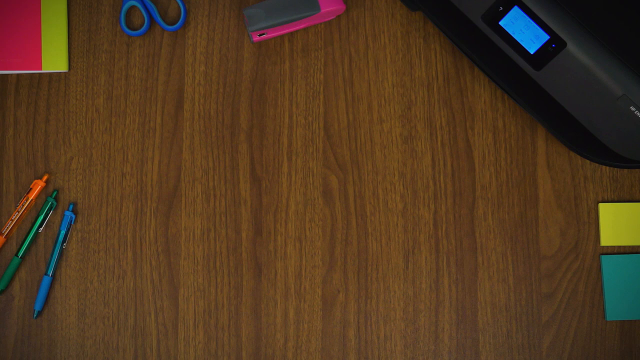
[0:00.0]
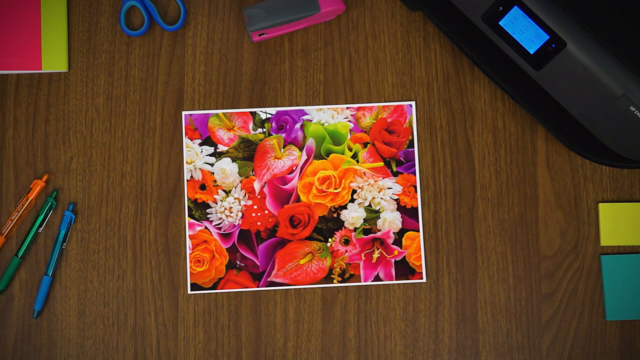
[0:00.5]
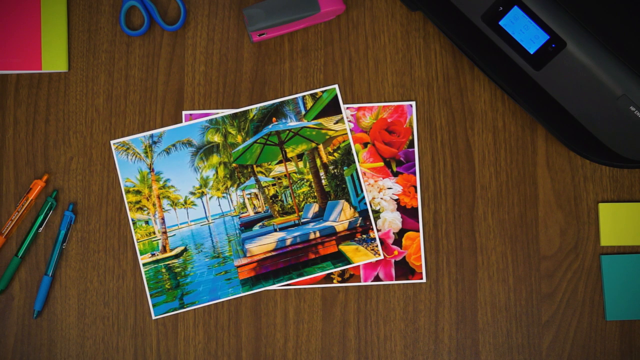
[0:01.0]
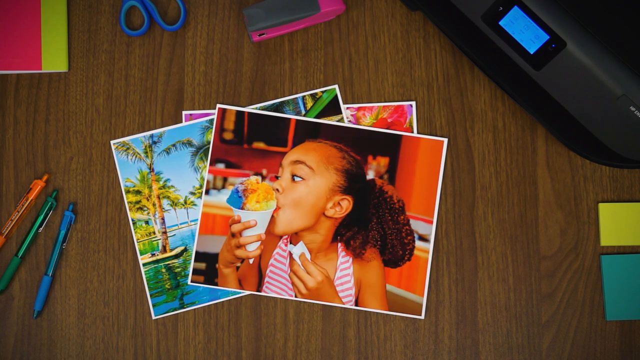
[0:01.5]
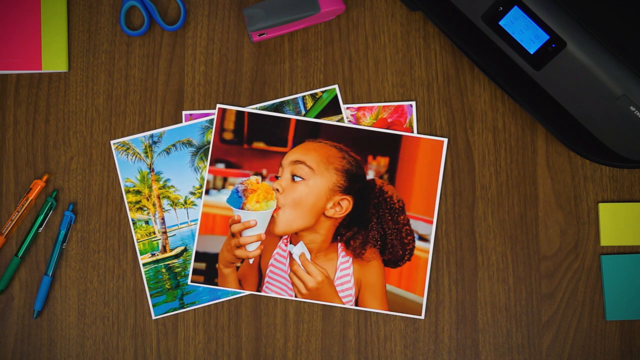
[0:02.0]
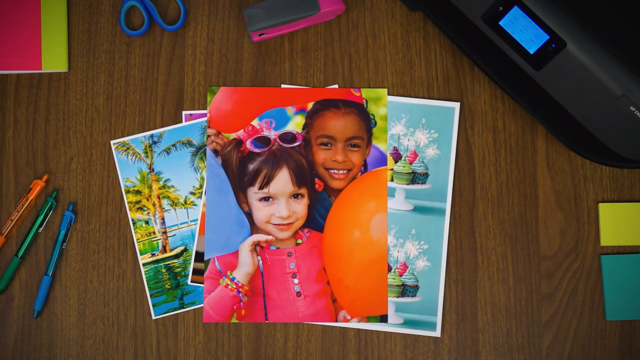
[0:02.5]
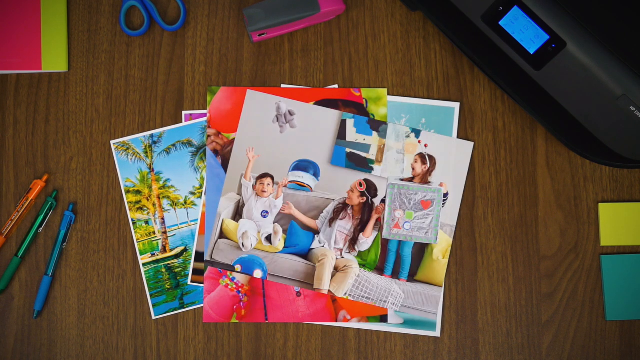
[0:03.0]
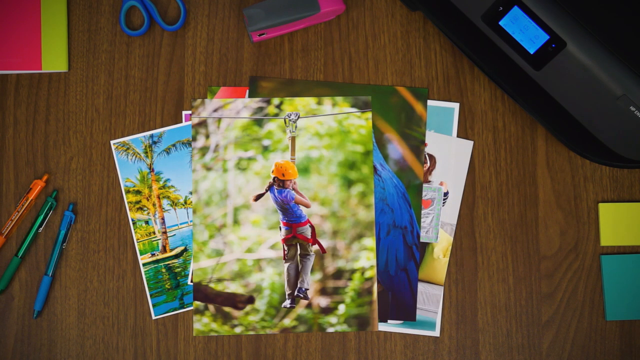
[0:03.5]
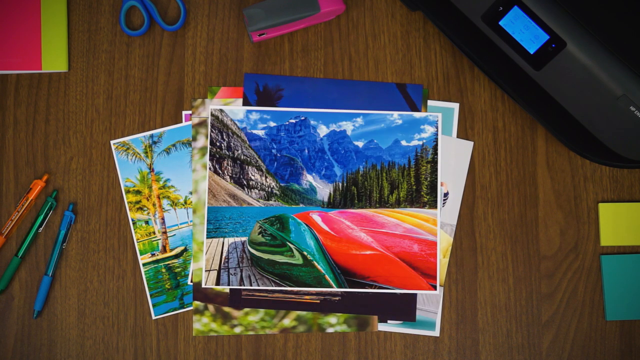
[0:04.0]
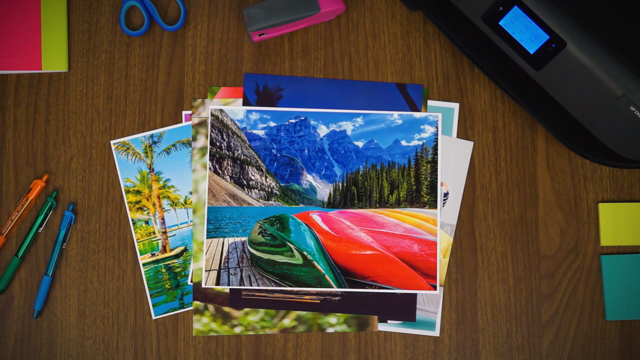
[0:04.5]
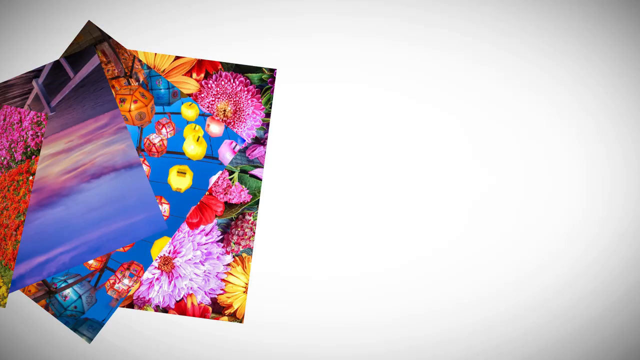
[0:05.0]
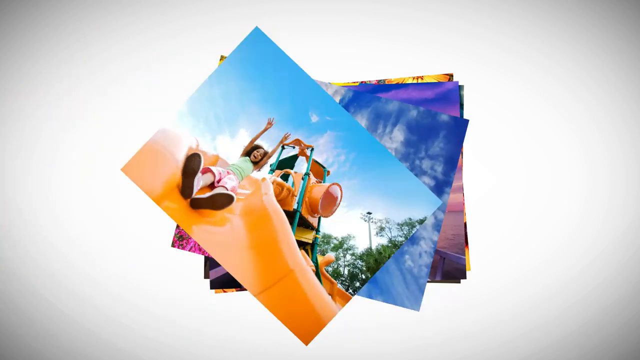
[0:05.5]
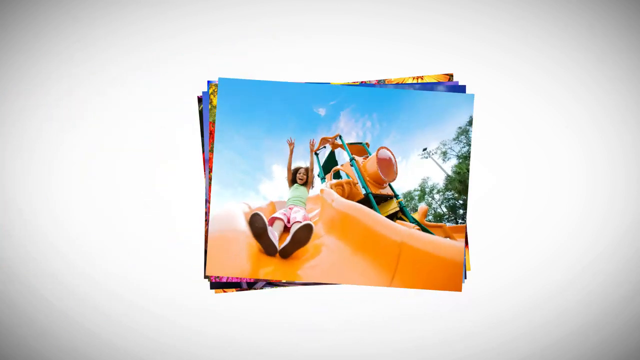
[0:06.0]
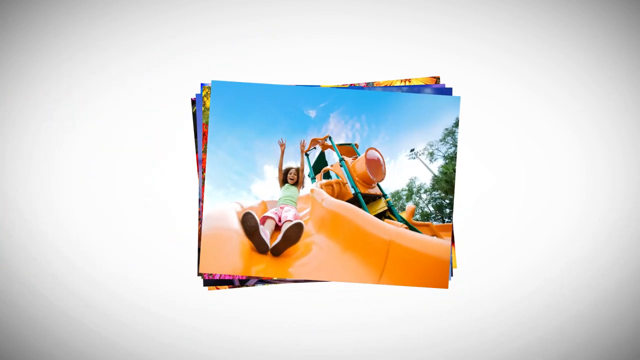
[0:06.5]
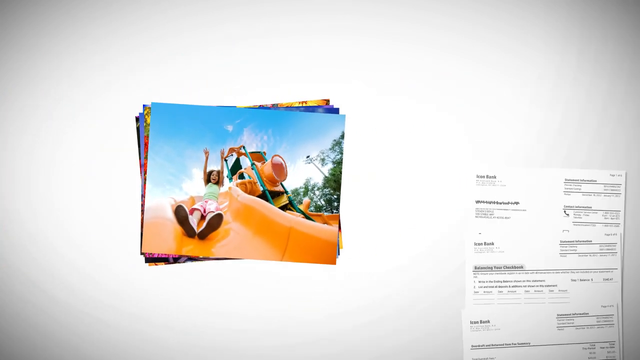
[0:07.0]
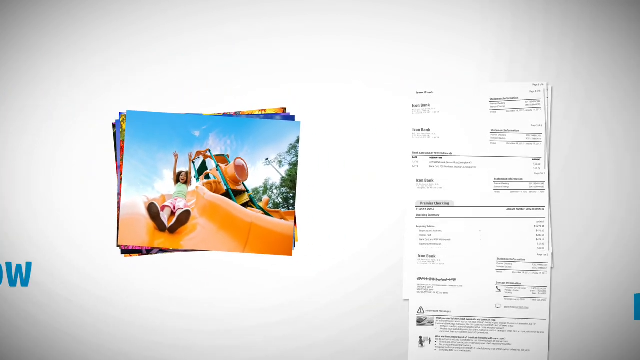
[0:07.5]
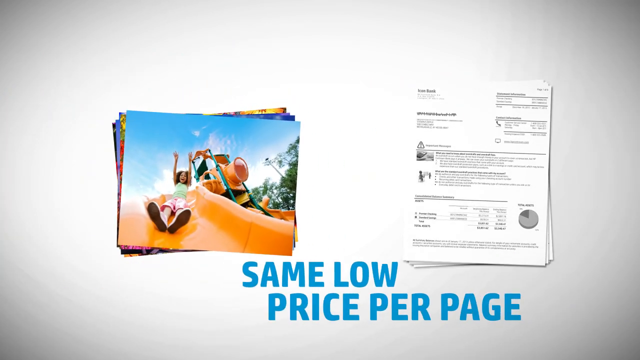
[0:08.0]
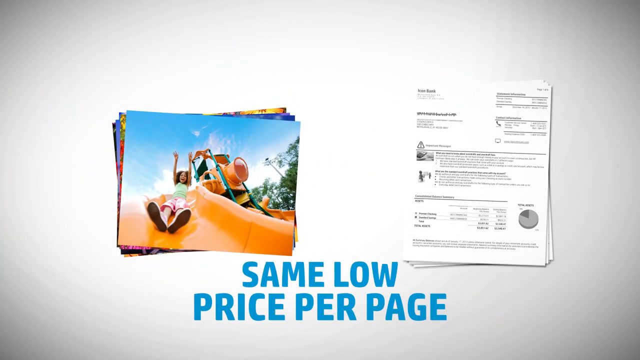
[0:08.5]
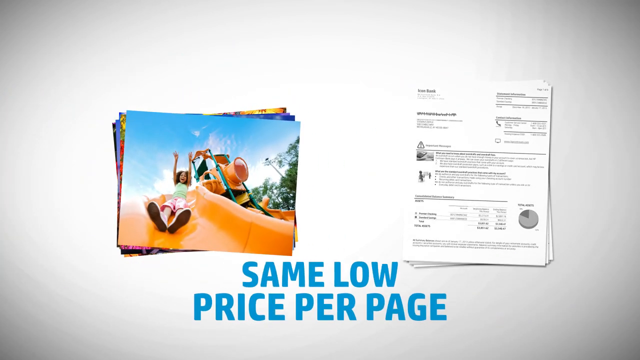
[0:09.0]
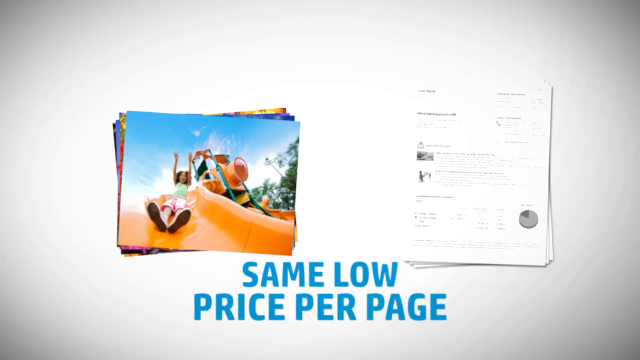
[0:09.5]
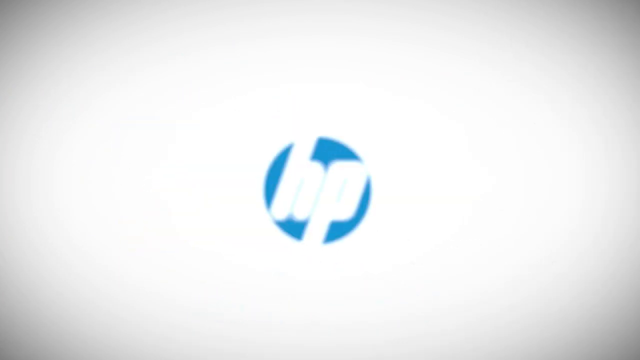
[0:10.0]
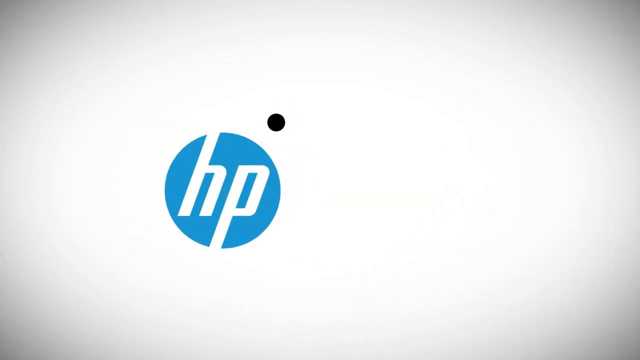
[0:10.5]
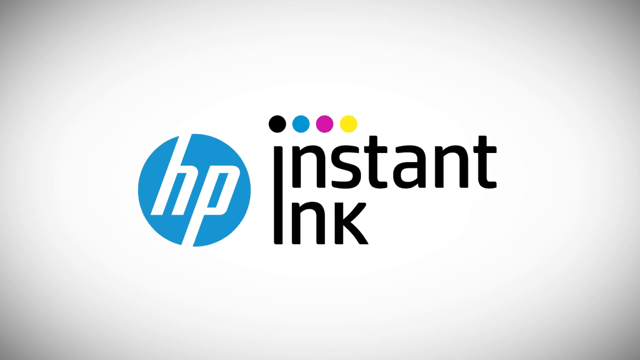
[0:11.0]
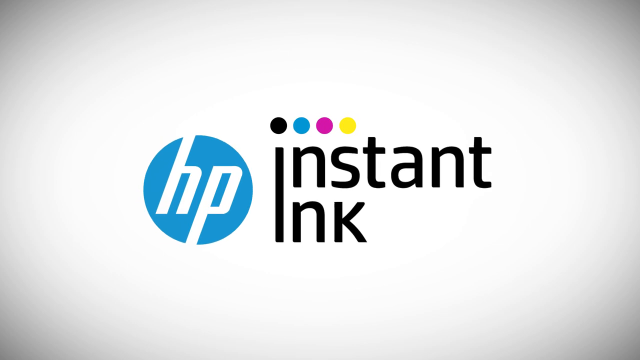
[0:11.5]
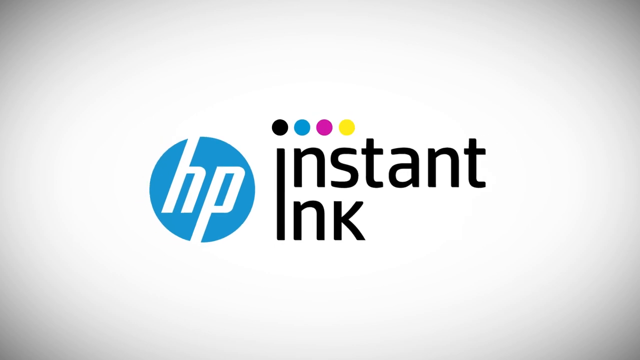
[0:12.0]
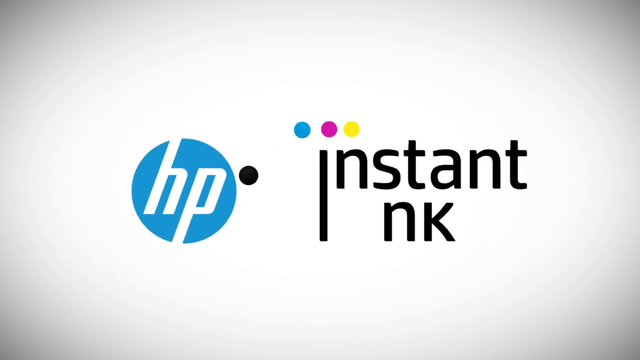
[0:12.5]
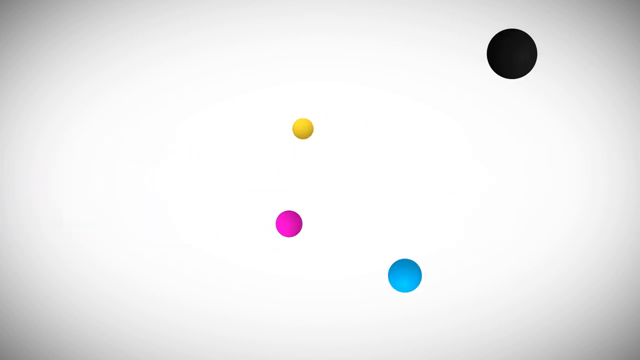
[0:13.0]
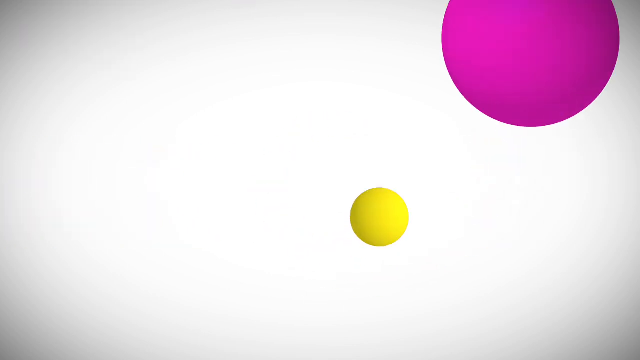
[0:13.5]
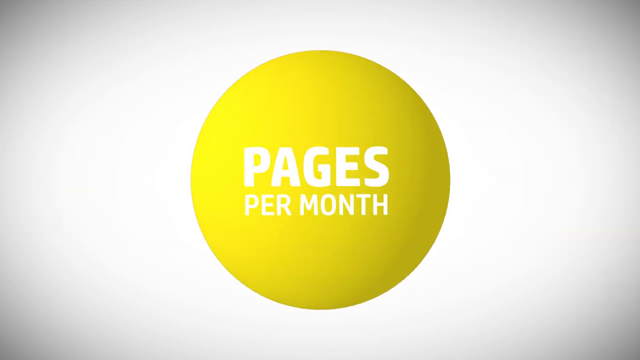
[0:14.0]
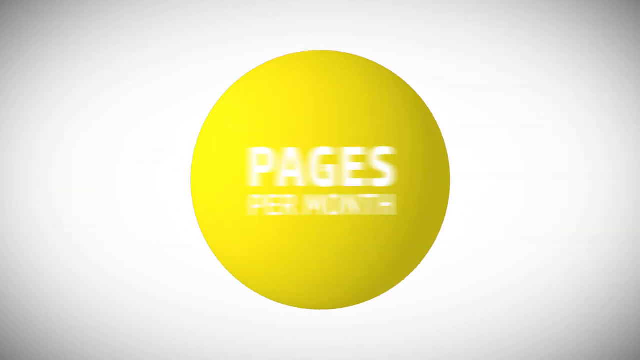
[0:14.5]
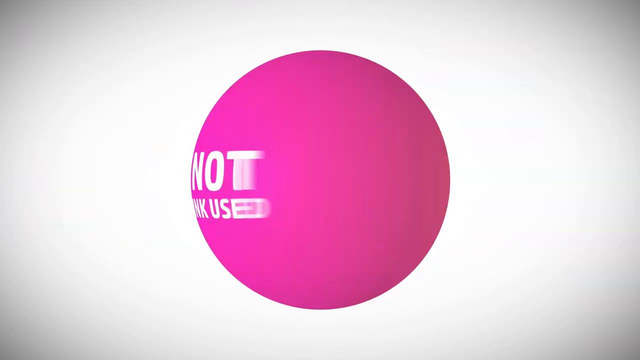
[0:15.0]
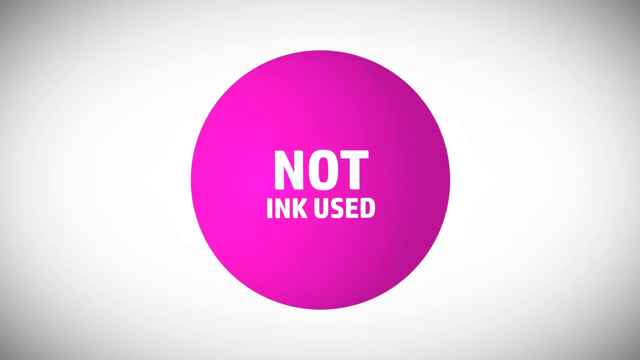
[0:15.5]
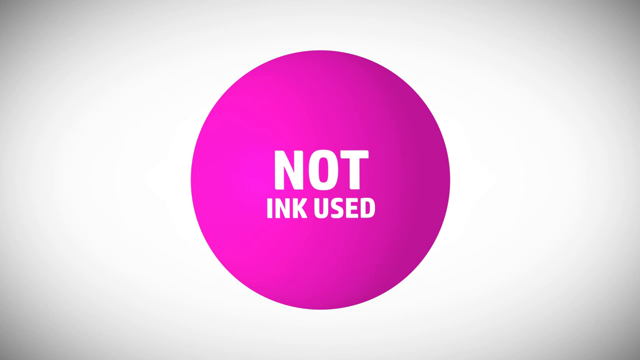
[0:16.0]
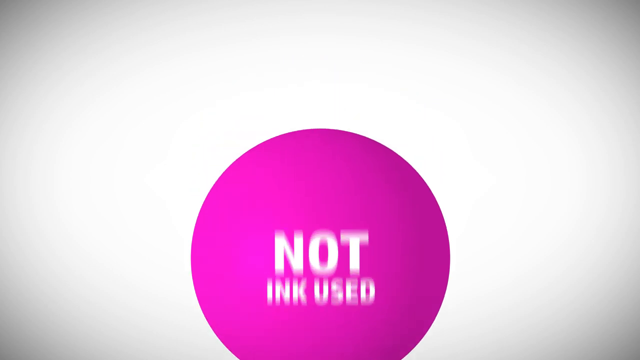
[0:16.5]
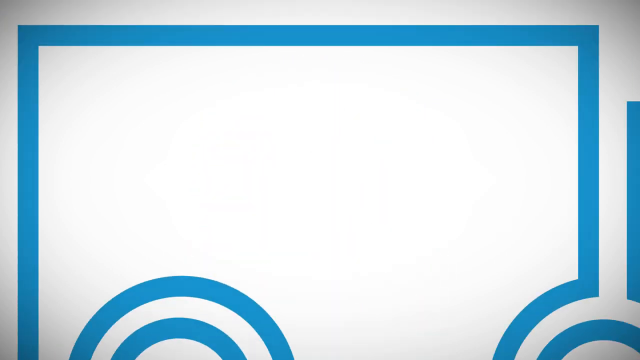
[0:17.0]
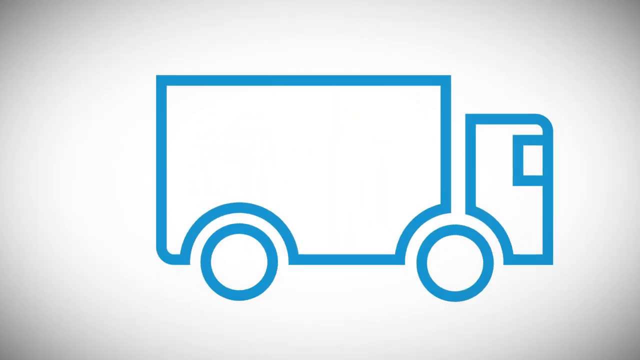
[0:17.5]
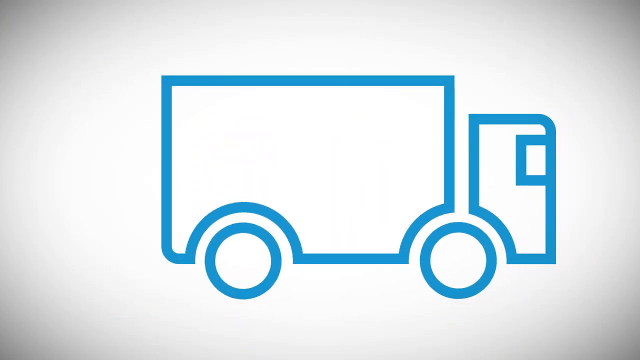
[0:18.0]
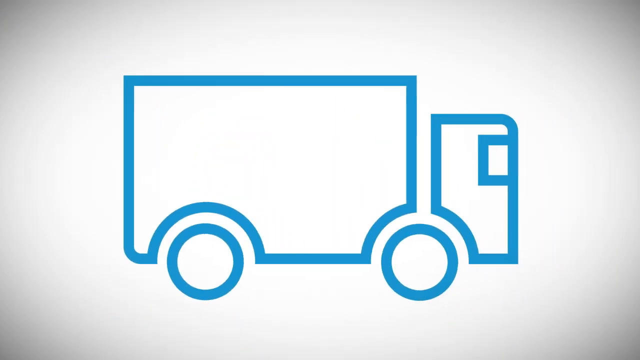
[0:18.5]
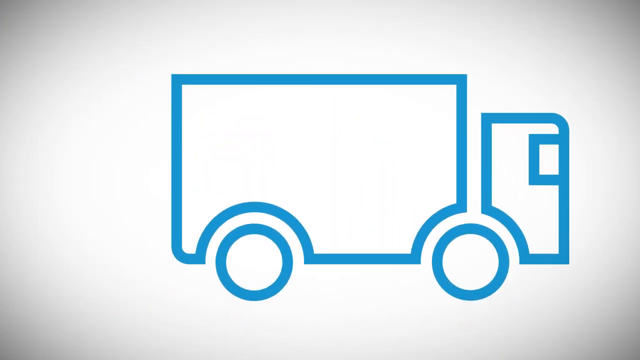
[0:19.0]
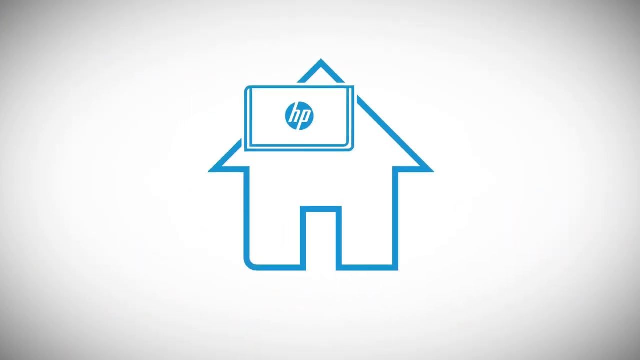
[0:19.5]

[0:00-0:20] A series of pictures on a desk represents a family's memories together. Logos appear in different colors as an introduction. At the start there are three pens on the desk: an orange pen, a green pen and a blue pen. There are also blue scissors, a pink stapler, a pink and green notebook, a green post-it and a blue post-it, as well as a printer with a black cartridge and a blue screen where customizations can be made. The video zooms fast through some of the pictures.